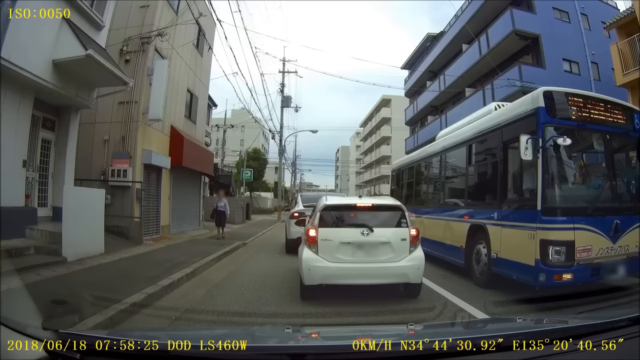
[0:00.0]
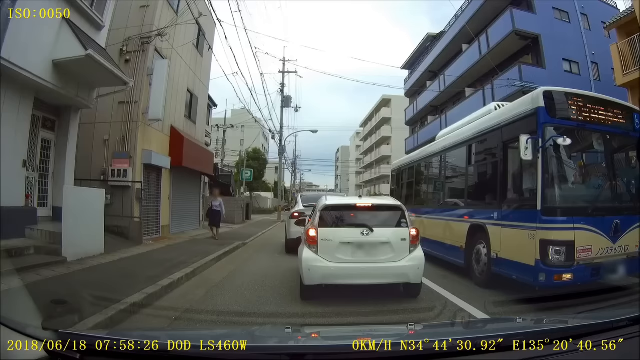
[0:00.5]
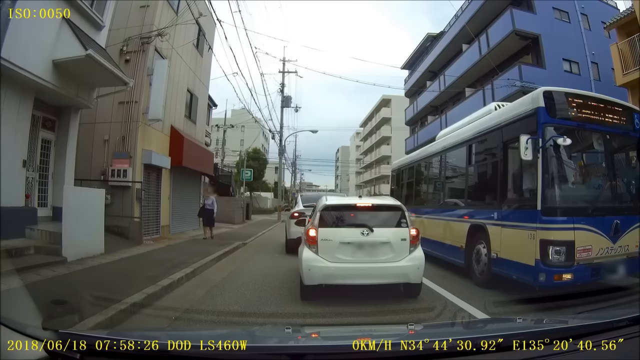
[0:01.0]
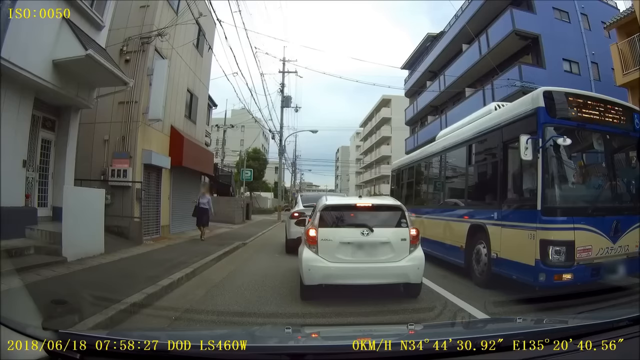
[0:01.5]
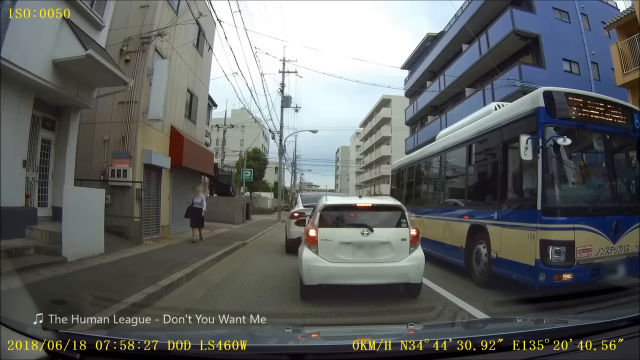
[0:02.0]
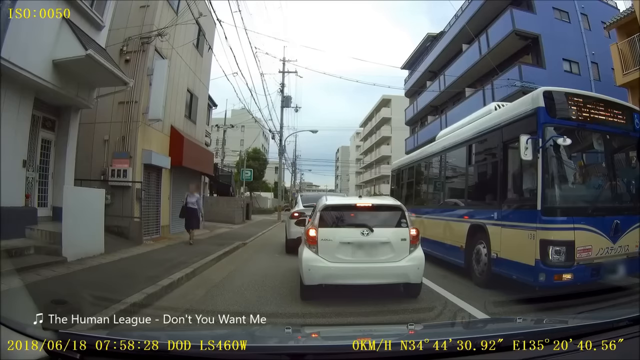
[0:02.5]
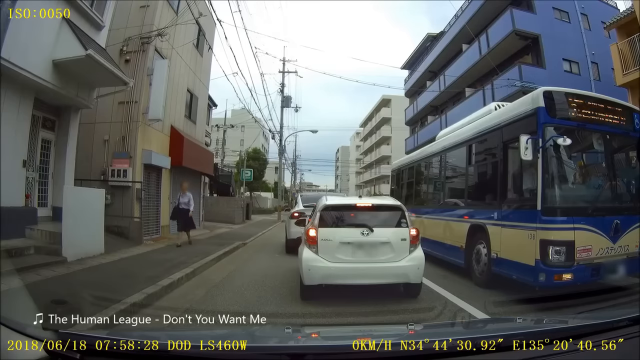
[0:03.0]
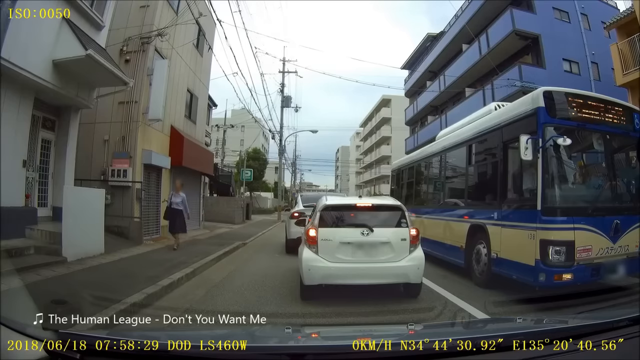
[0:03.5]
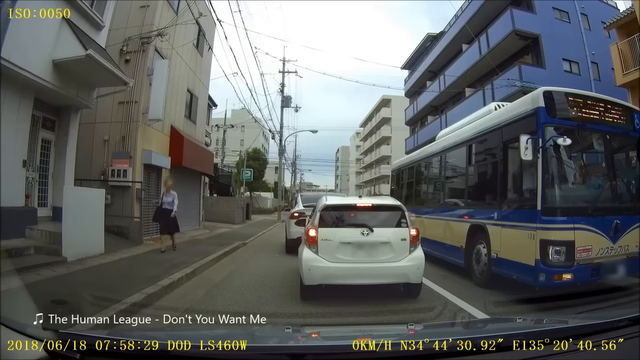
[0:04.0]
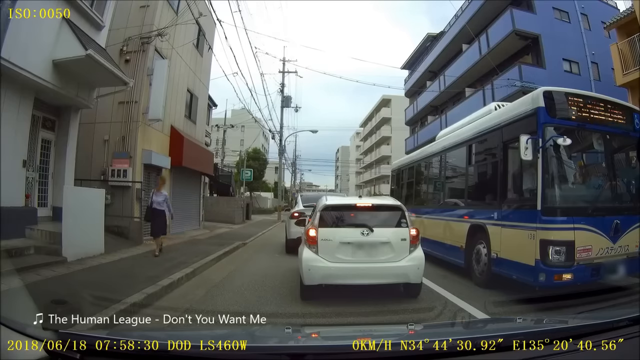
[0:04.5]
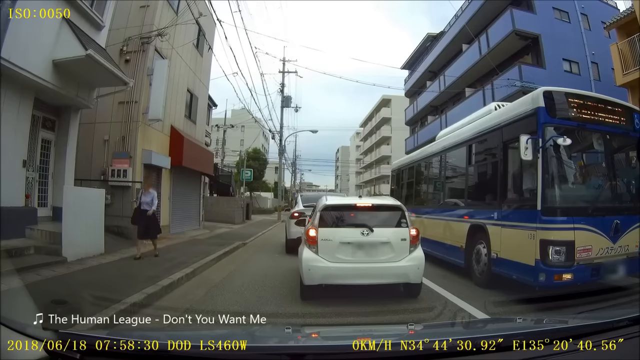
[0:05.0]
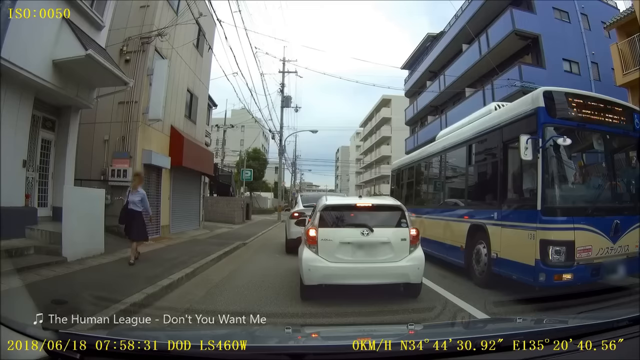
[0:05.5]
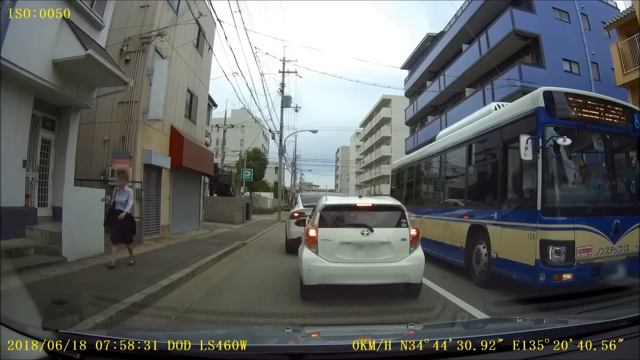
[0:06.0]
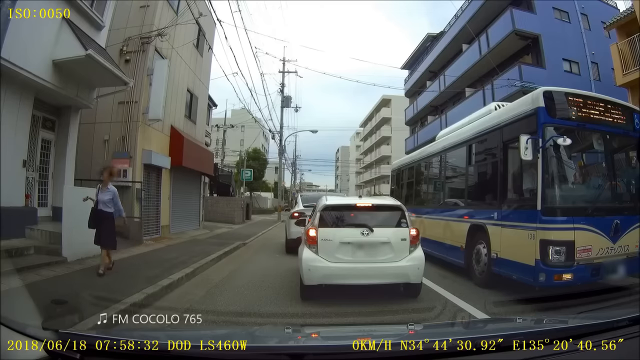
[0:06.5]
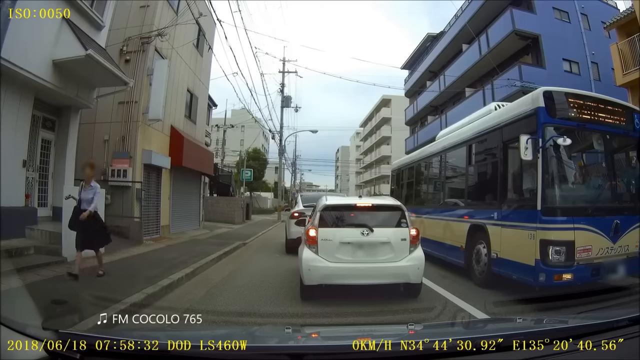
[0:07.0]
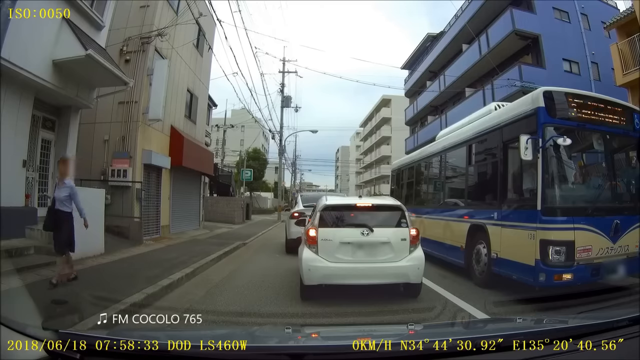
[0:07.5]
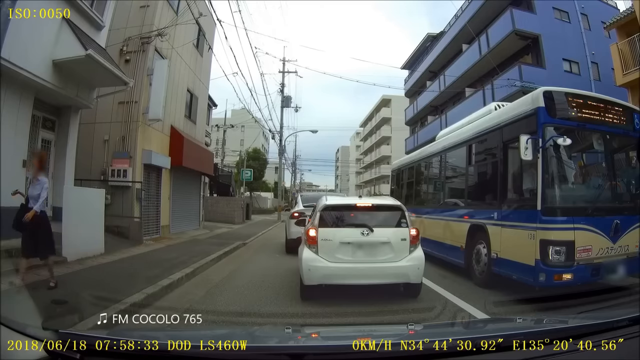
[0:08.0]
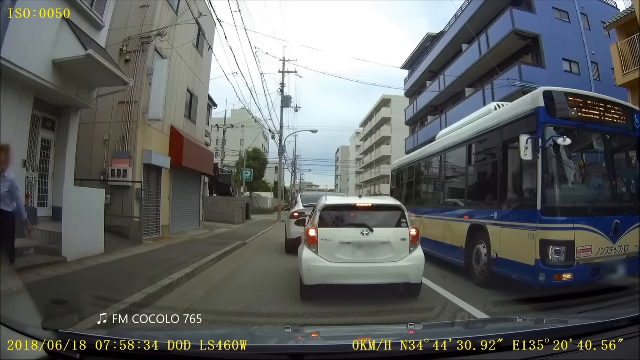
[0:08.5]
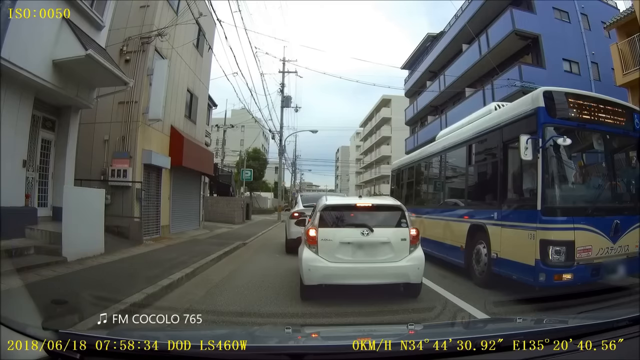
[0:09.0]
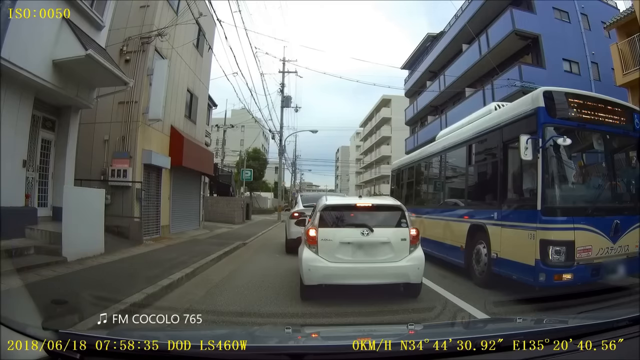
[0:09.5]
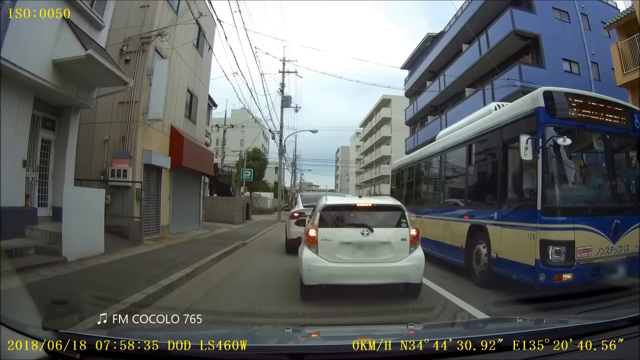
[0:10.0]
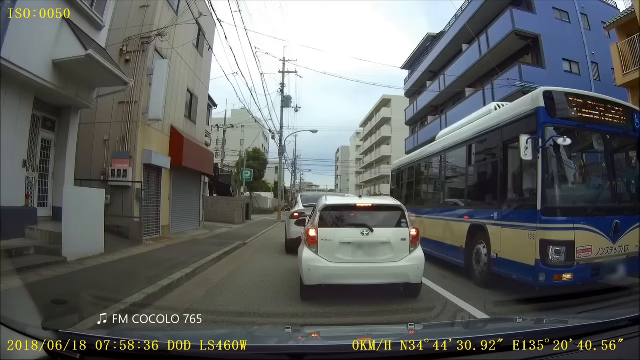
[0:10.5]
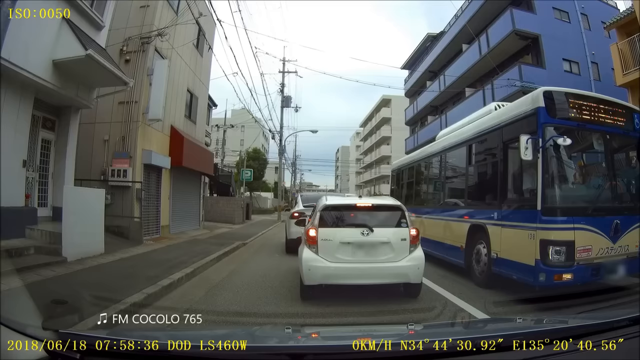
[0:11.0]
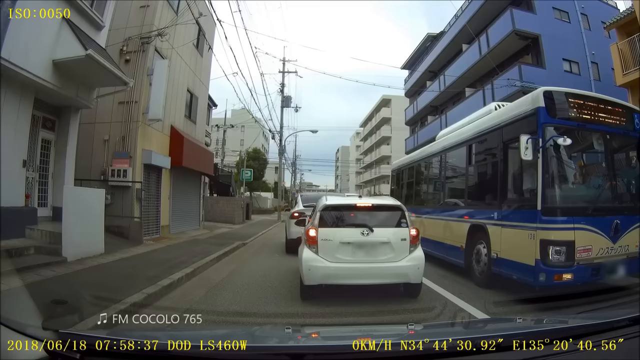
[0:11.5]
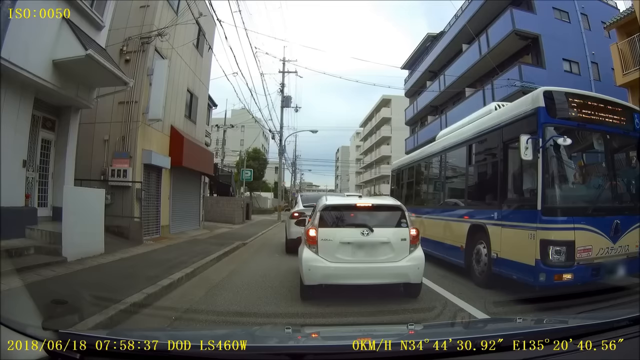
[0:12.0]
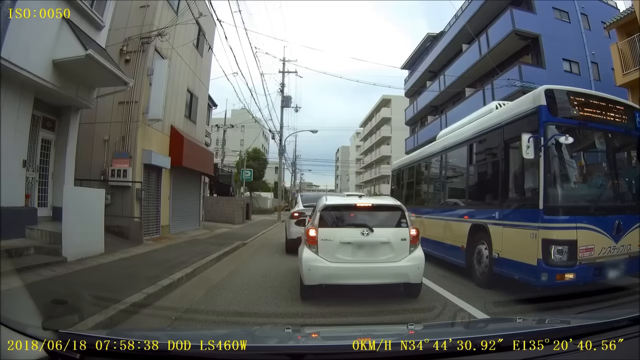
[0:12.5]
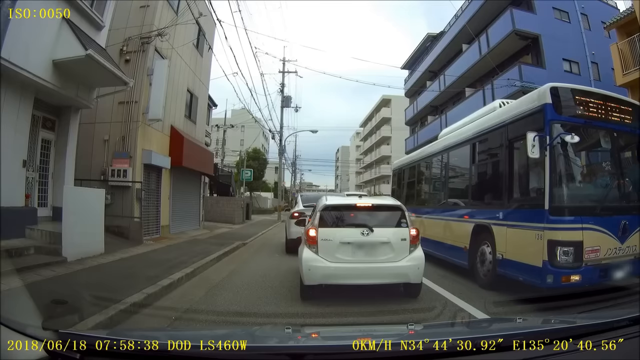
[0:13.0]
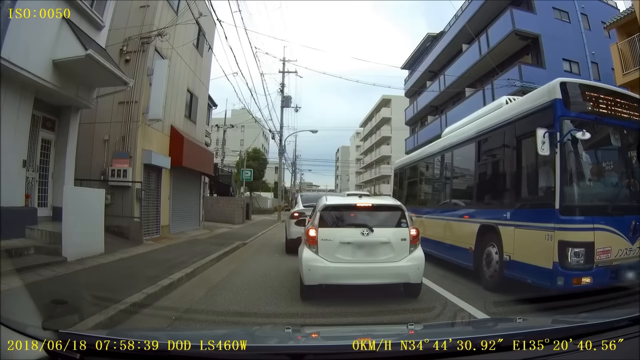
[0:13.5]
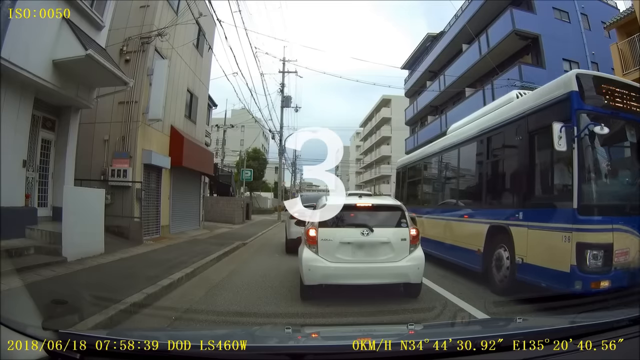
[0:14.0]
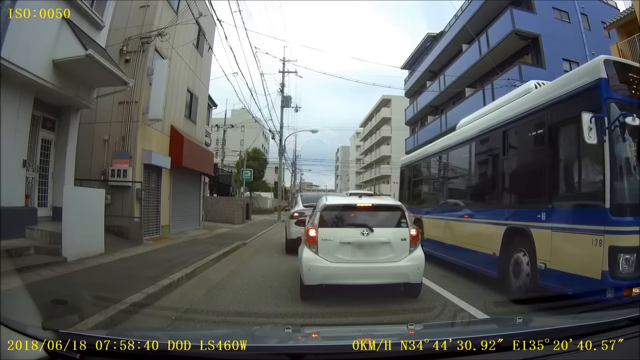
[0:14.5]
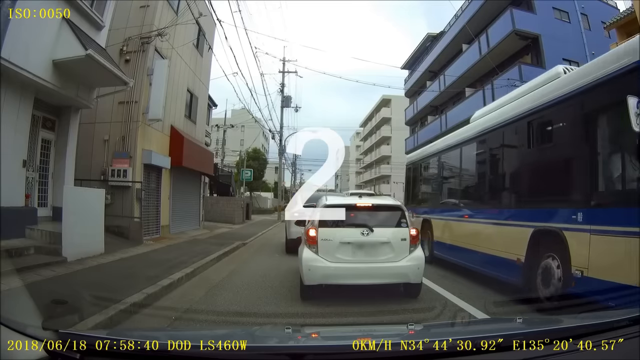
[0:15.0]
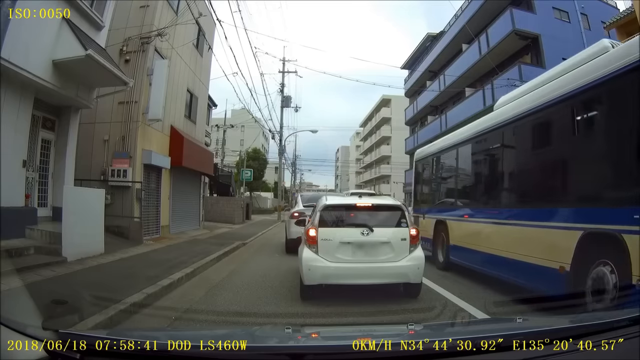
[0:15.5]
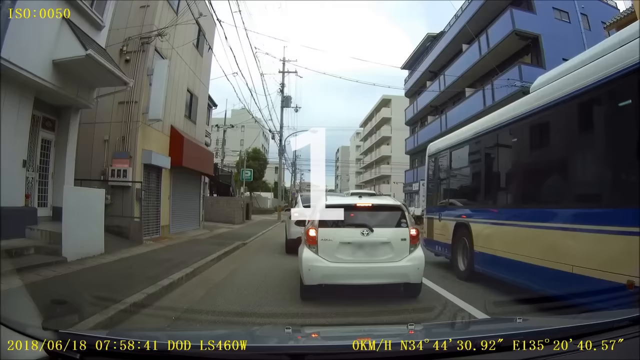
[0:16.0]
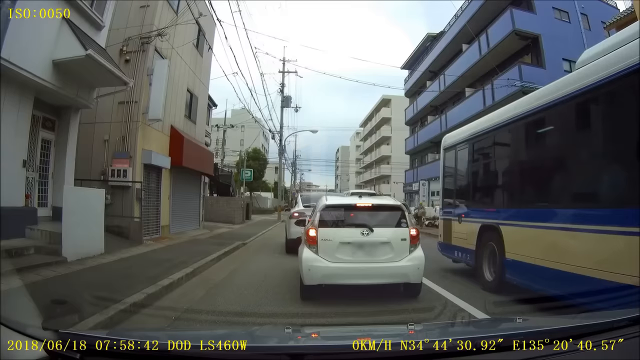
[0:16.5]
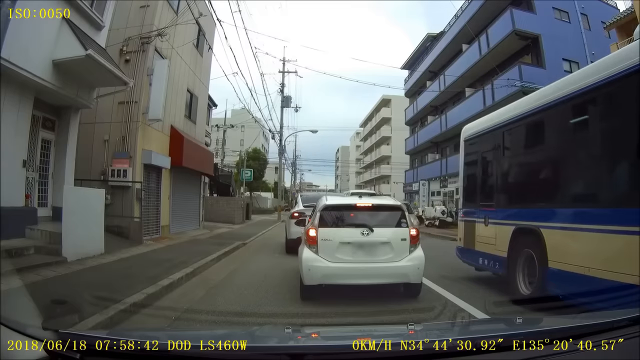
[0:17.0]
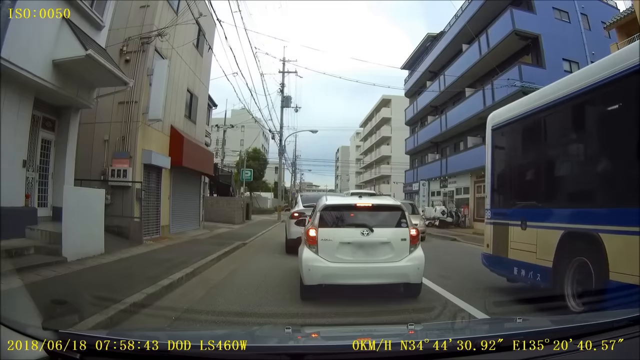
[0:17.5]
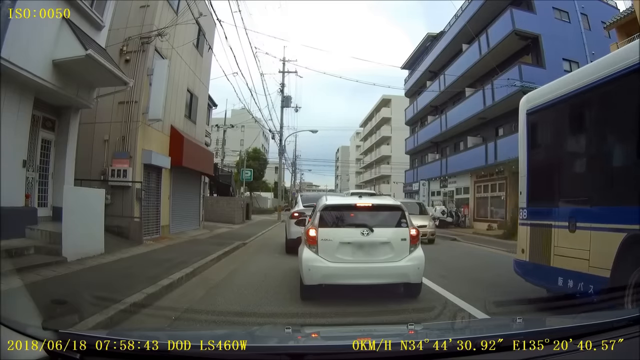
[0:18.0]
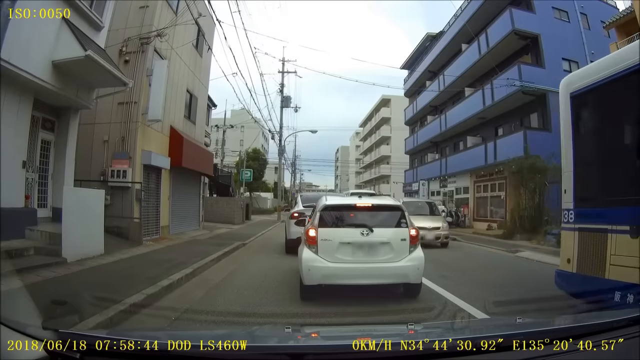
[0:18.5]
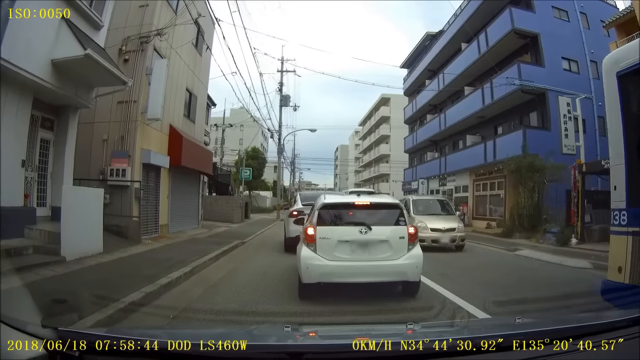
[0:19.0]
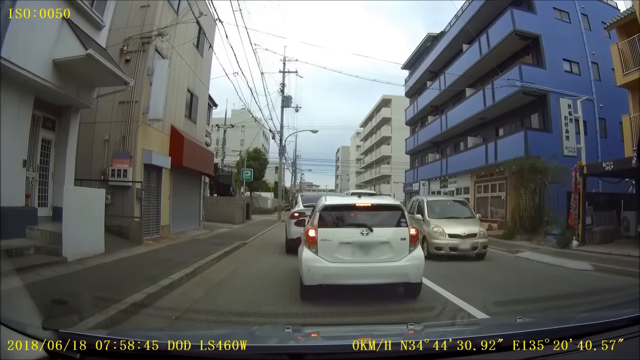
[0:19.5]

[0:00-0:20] A car moves slowly at a steady pace through traffic. A yellow radar-like display at the very bottom of the screen shows the time and geographic locations, and there is text at the top left of the screen. The setting looks like it may be a third-world country, with what appears to be a somewhat dirt road and very untraditional buildings all around, including various types of monolith buildings moving by. It is clearly daylight, with a clear blue sky and long white clouds. A bus carries blue and yellow Japanese text, suggesting the location is likely Japan.